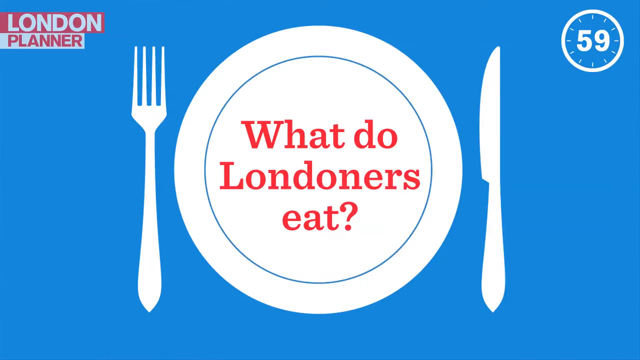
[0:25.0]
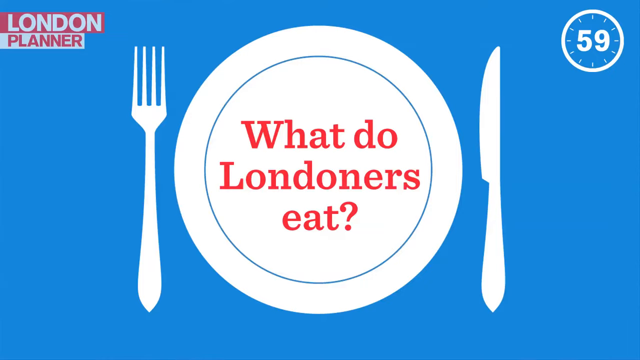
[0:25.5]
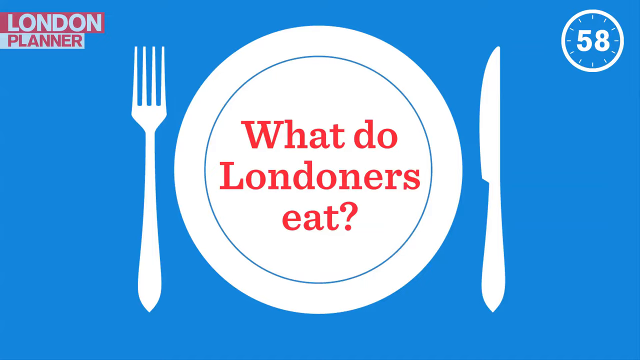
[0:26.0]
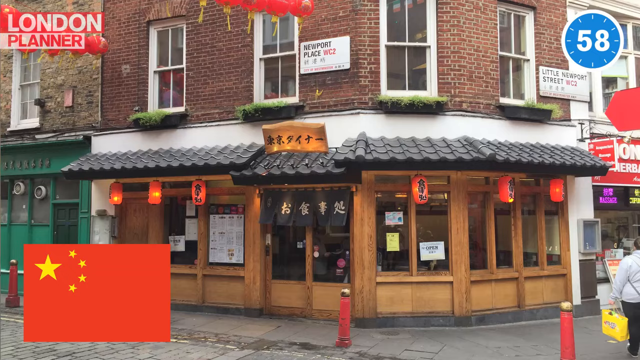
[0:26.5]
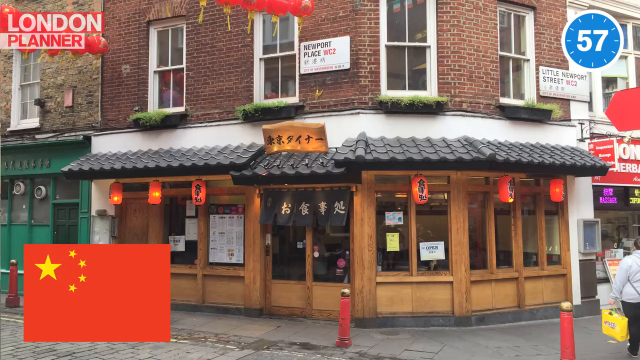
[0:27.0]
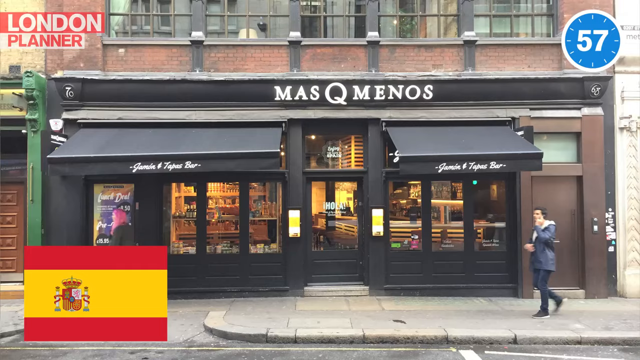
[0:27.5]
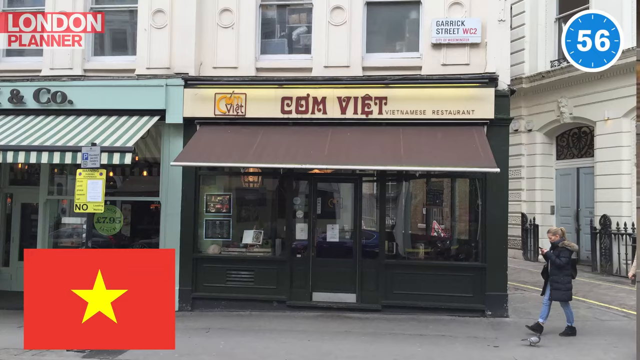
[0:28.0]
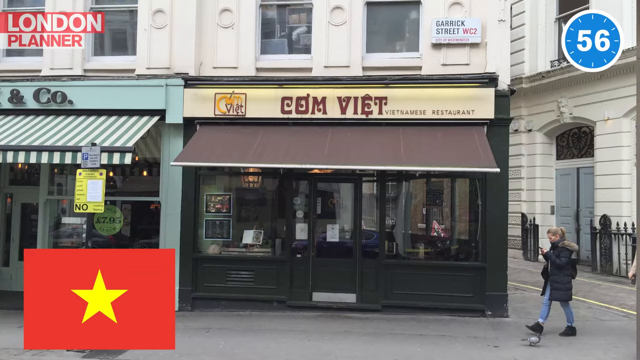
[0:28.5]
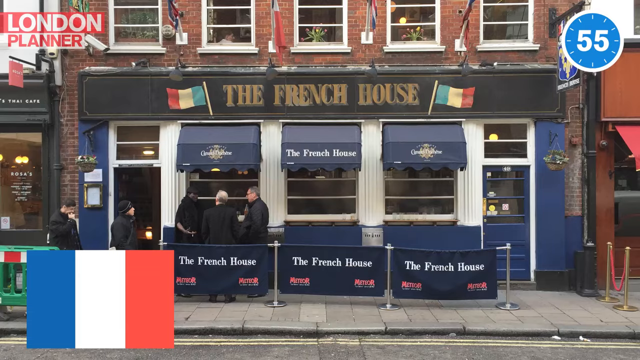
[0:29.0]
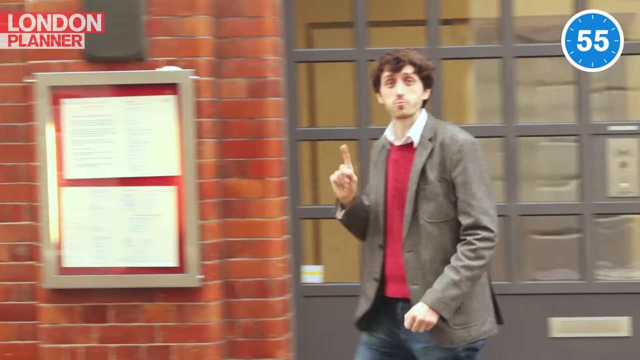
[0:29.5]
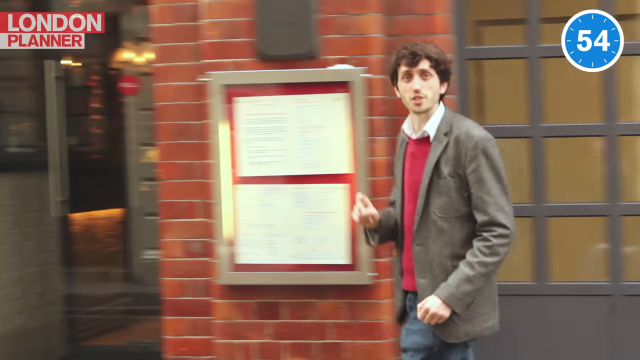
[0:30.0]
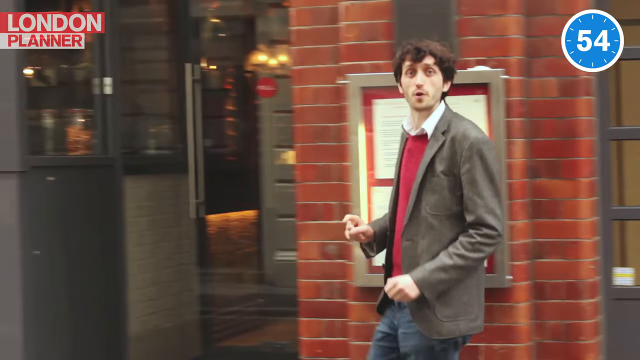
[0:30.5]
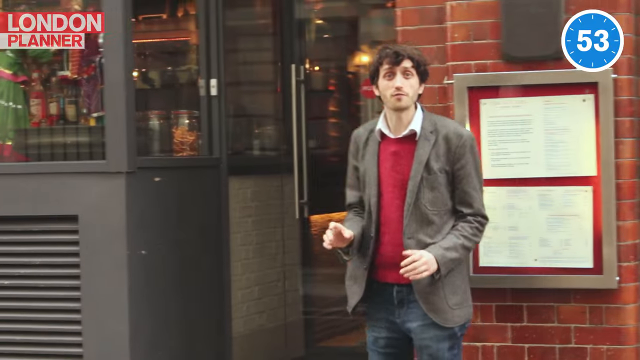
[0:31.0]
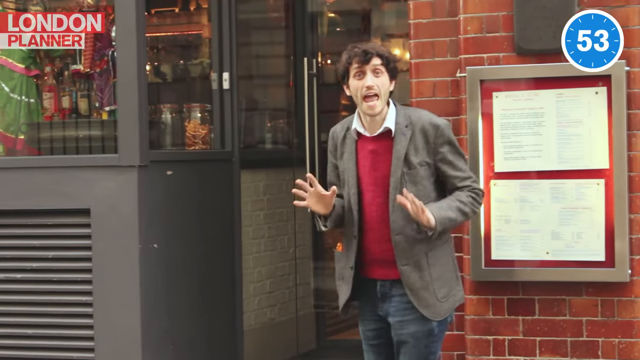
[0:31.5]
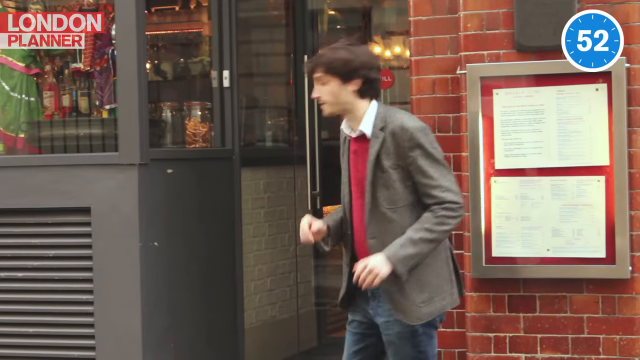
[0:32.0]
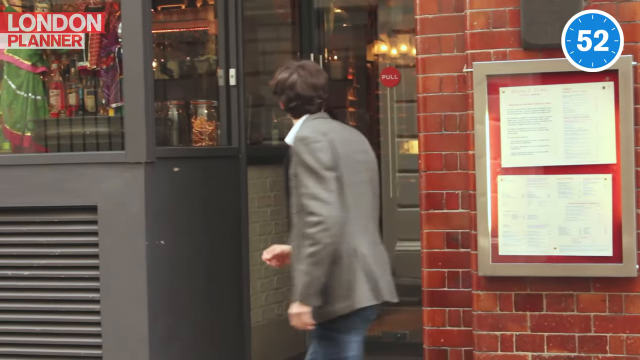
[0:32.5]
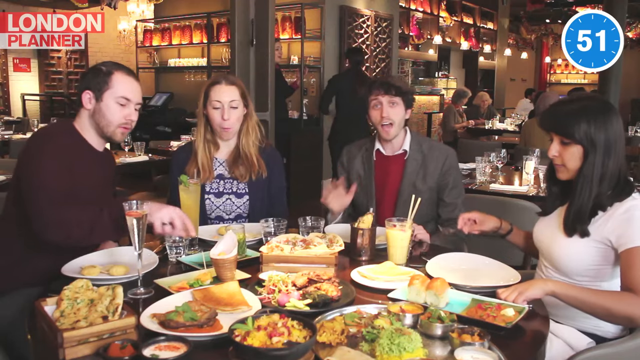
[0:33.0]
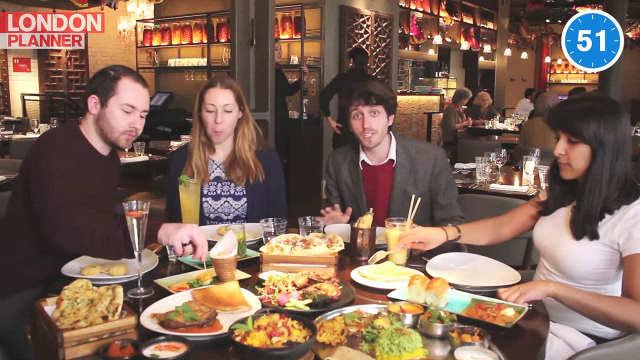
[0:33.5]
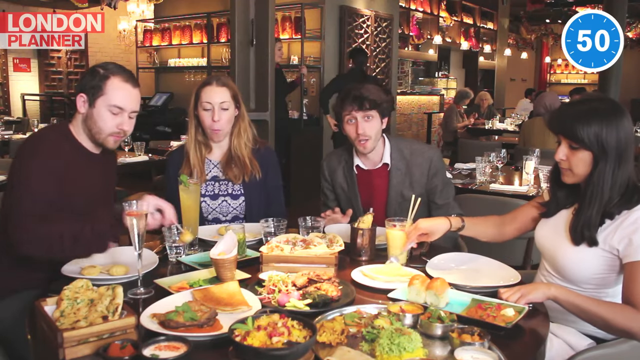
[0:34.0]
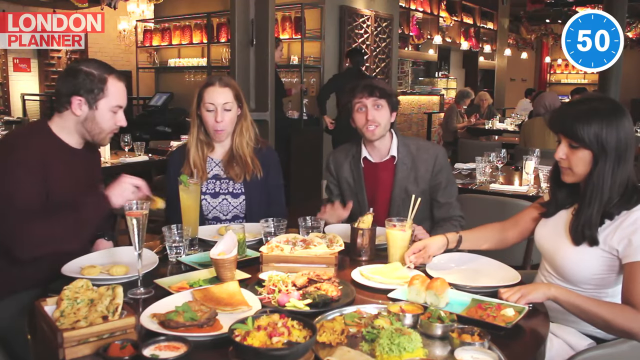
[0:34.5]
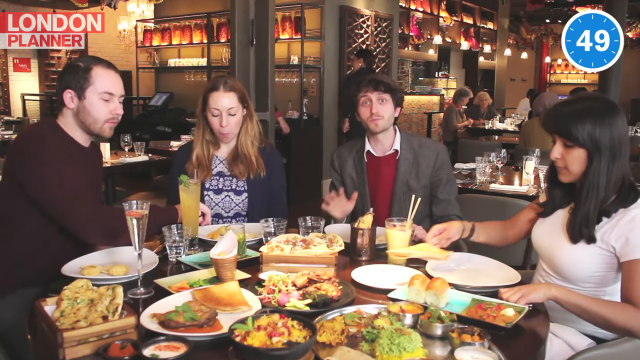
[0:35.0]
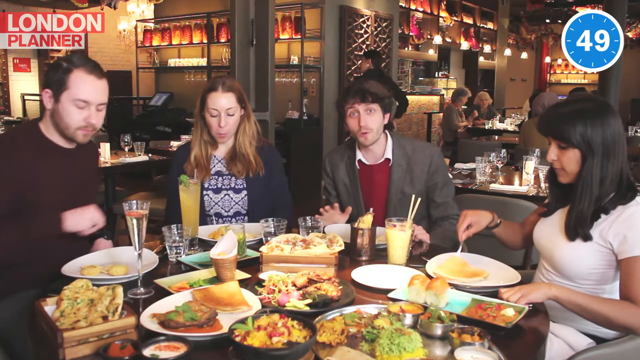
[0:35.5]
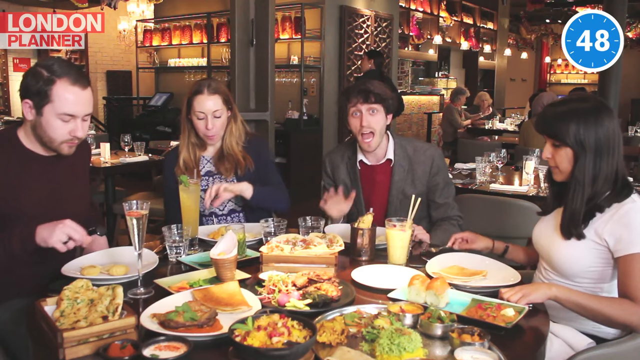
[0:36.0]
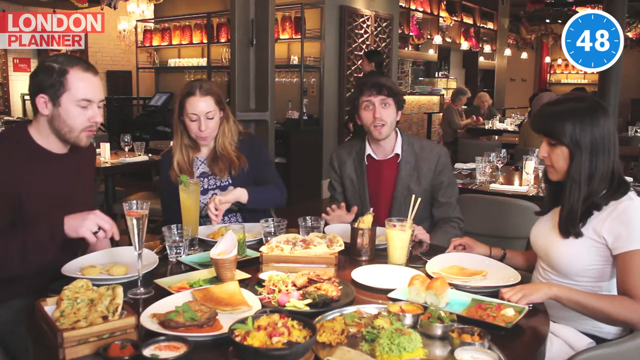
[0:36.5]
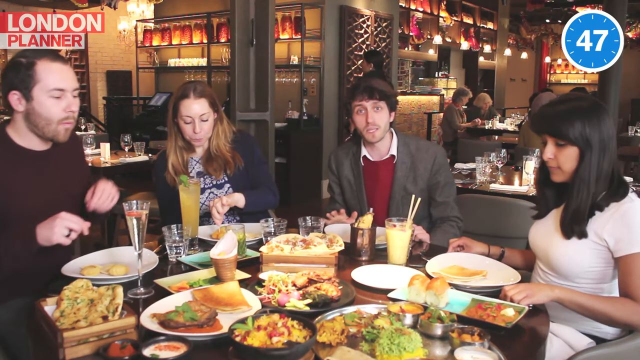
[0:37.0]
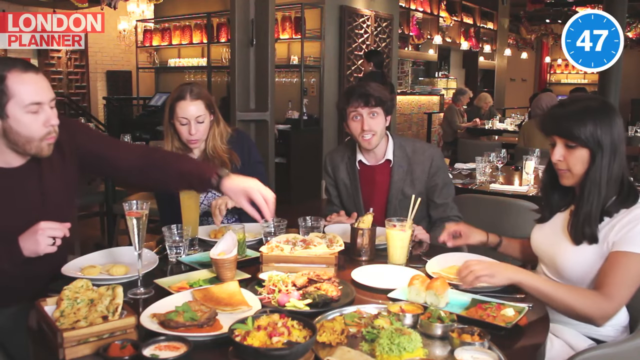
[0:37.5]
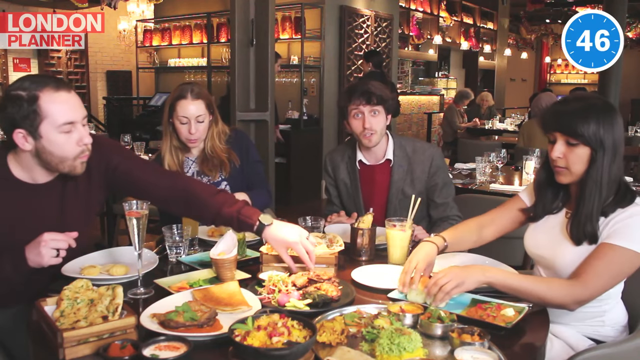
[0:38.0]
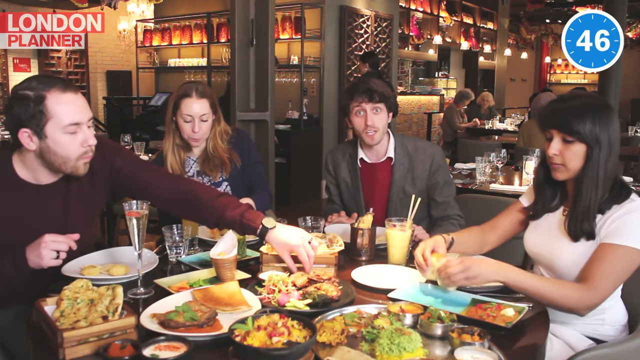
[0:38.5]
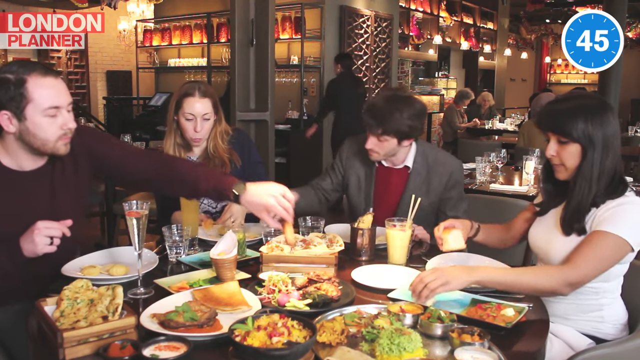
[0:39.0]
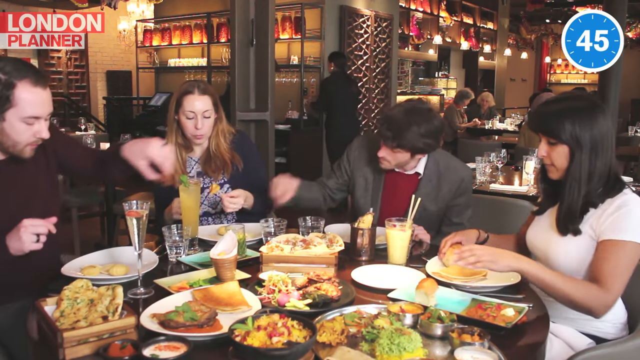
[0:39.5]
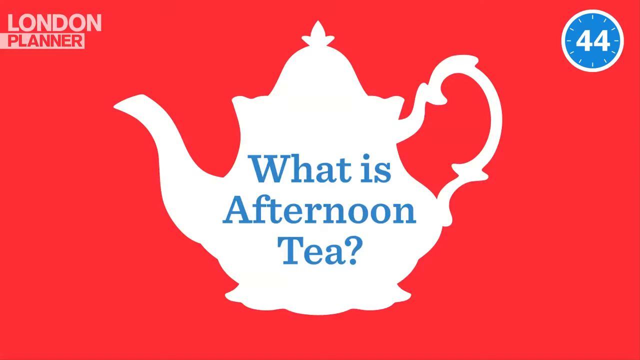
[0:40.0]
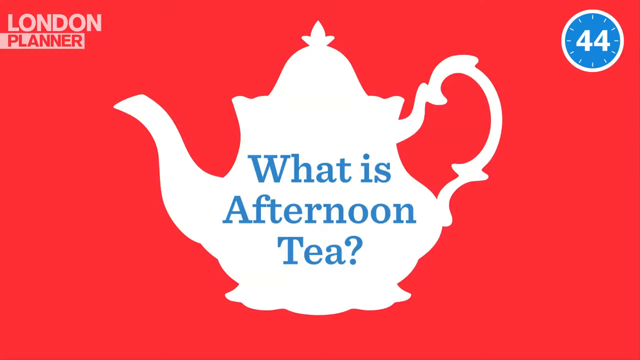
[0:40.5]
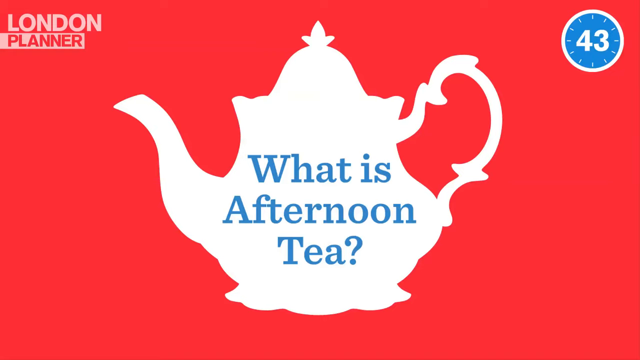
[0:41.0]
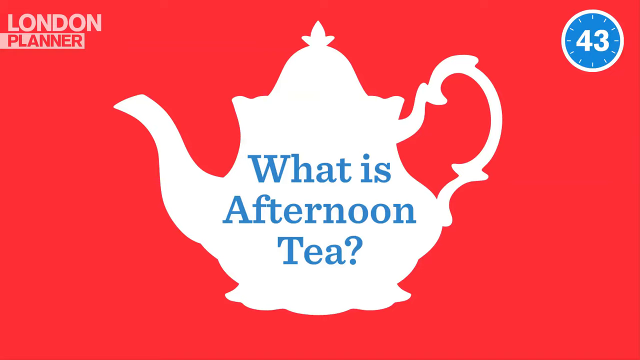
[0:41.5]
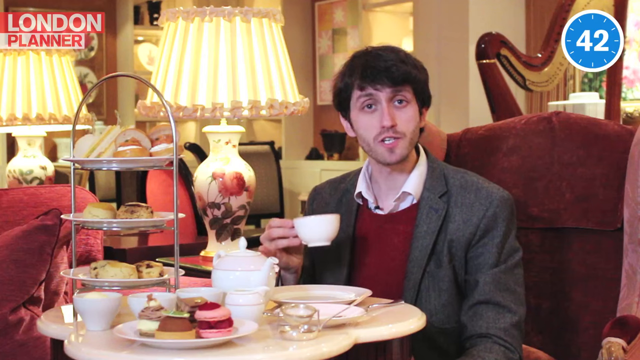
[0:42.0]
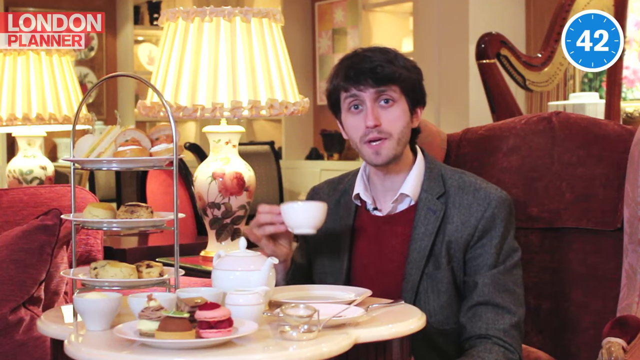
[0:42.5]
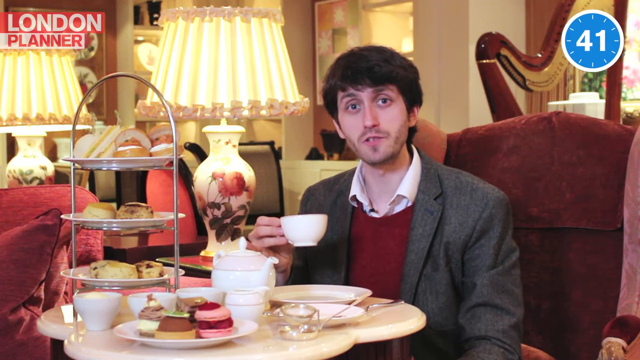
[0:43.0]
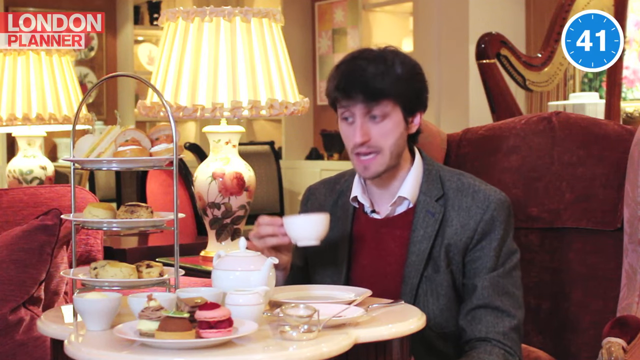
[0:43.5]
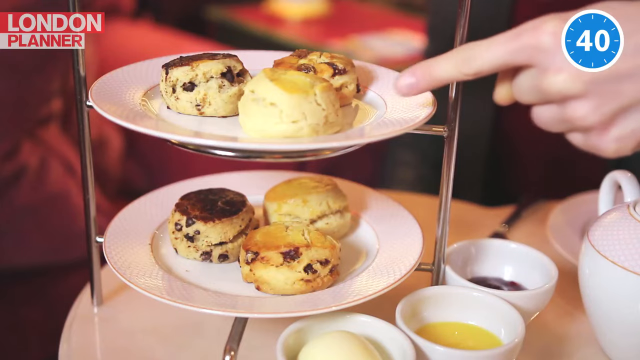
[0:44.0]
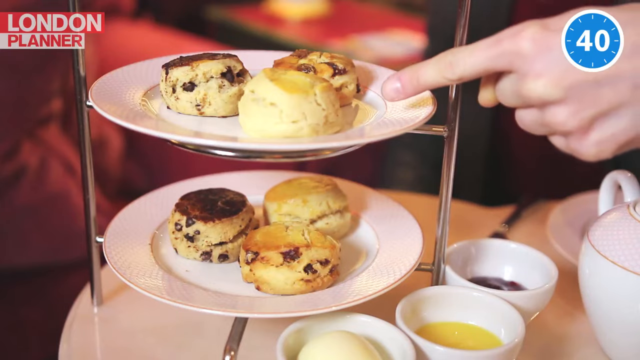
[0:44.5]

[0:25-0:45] White text reads "what do Londoners eat?" alongside an illustrated plate with a fork and a knife. The man is then sitting at a table with a group of people: what looks like a woman to his right, a man to her right, and a woman in a white dress seated on his left. It looks like a fish and chips place, with a huge round table filled with fish and chips. A timer on the right-hand side counts down from 50. Other patrons are eating in the area. Before this restaurant, there are quick flashes of four or five different restaurants, each with a different color flag; one is Vietnamese and another French. After the fish and chips place, the video transitions to afternoon tea, with blue text reading "what is afternoon tea".